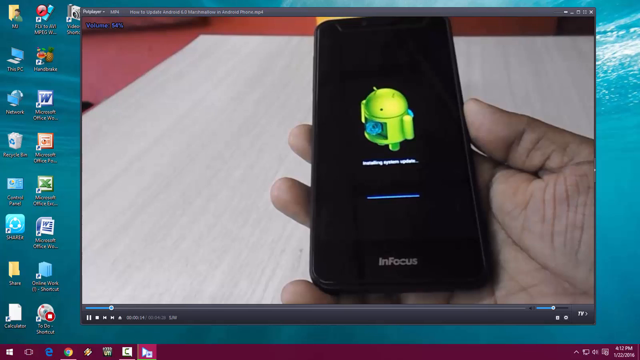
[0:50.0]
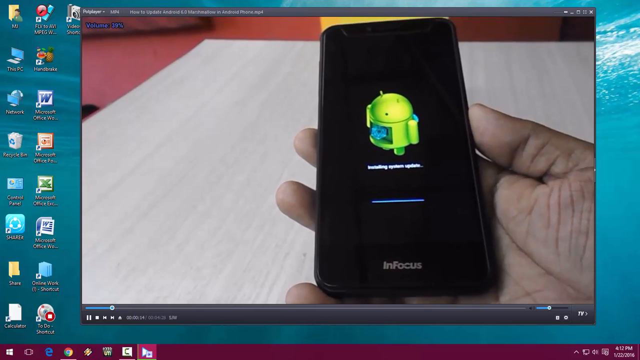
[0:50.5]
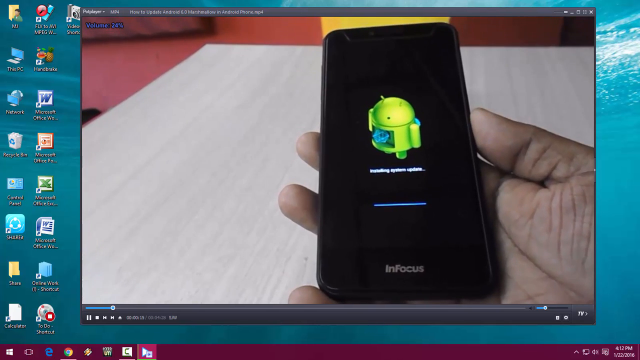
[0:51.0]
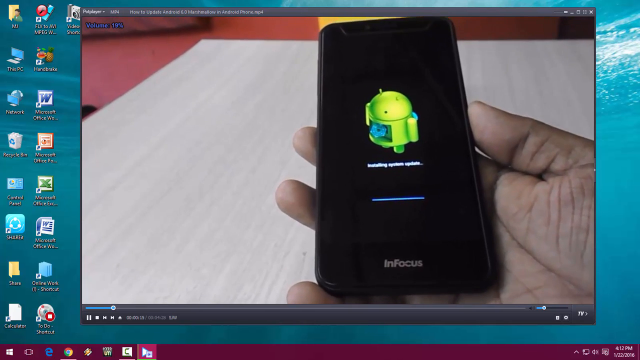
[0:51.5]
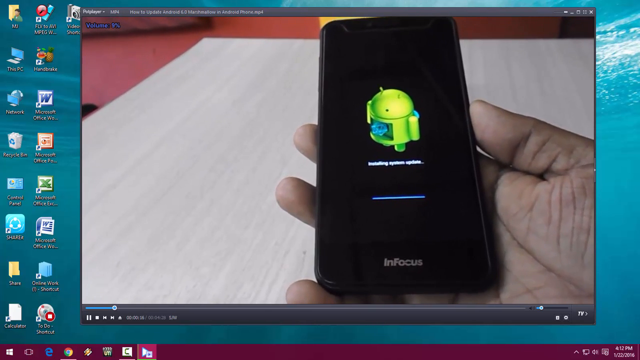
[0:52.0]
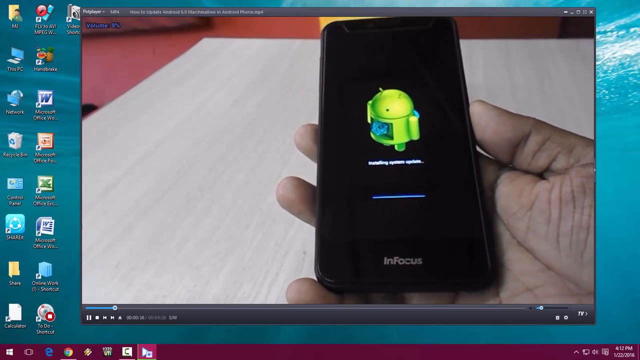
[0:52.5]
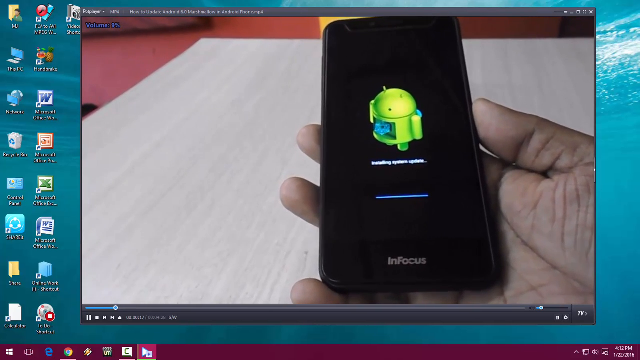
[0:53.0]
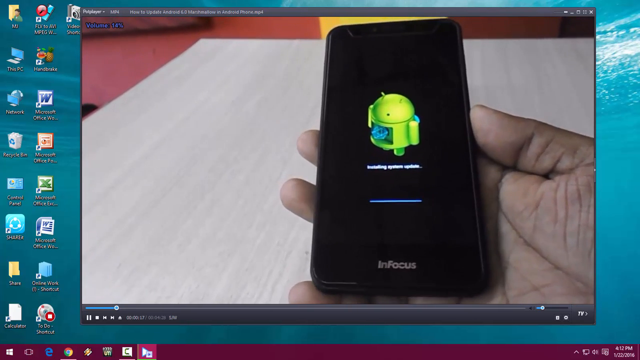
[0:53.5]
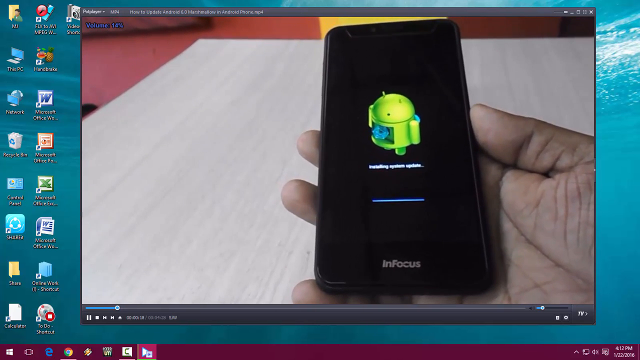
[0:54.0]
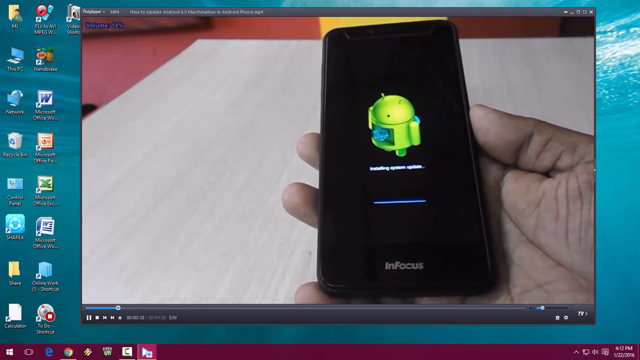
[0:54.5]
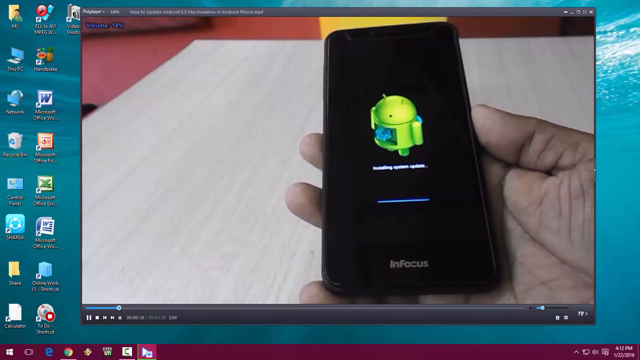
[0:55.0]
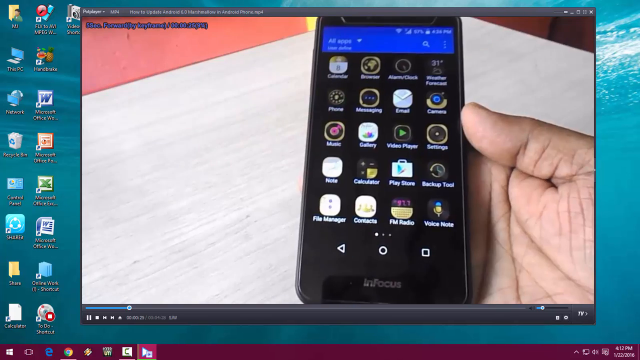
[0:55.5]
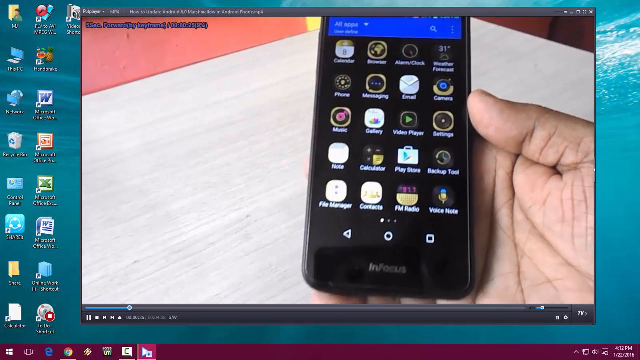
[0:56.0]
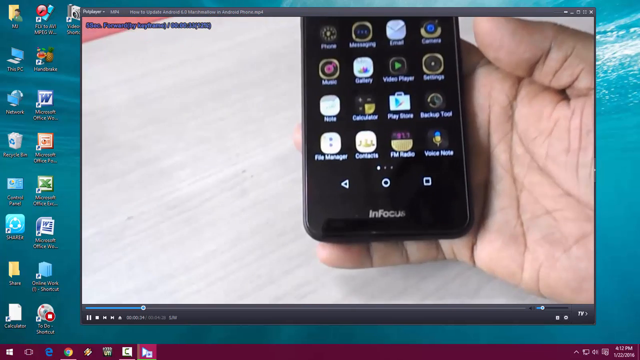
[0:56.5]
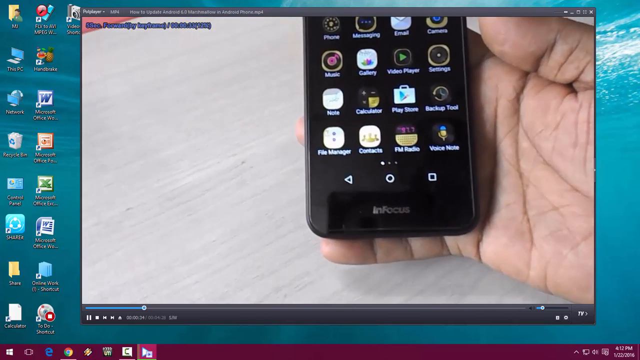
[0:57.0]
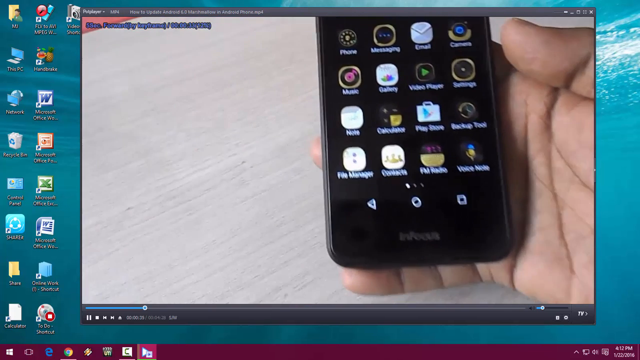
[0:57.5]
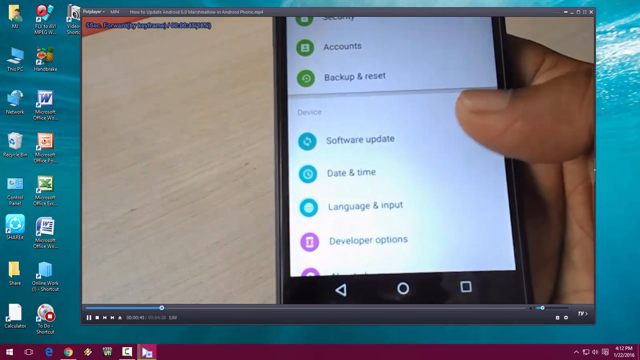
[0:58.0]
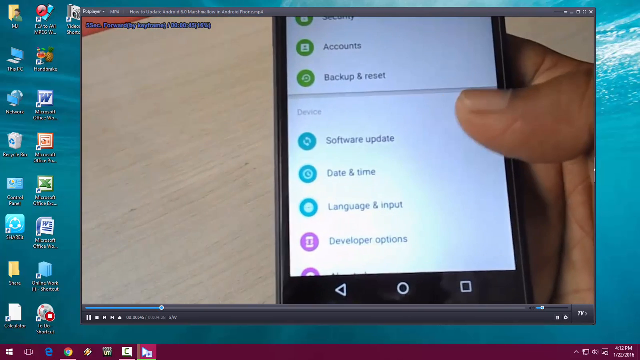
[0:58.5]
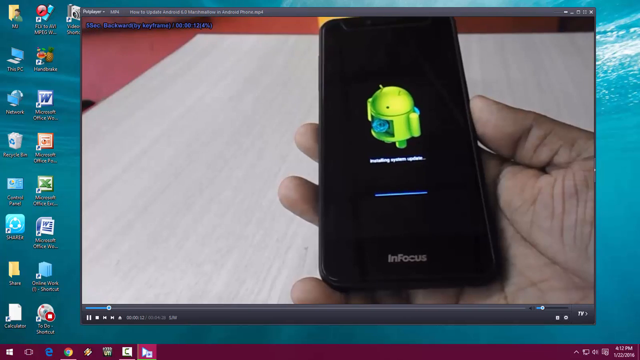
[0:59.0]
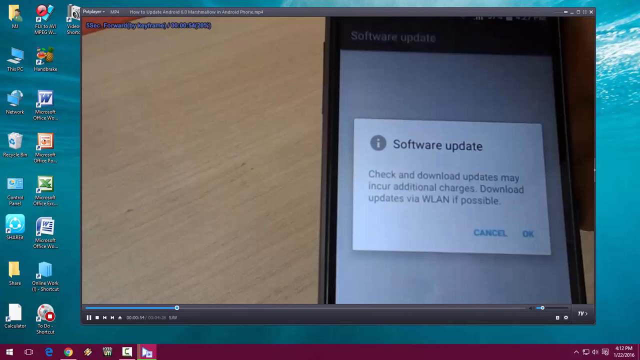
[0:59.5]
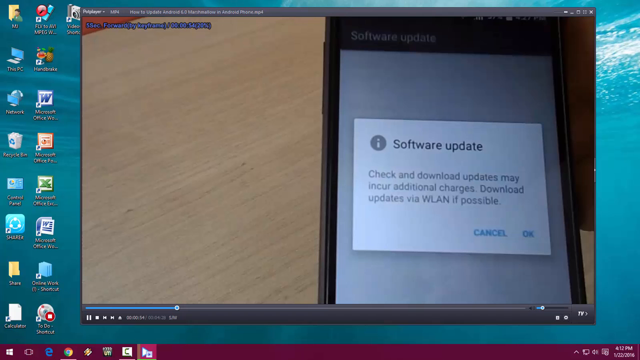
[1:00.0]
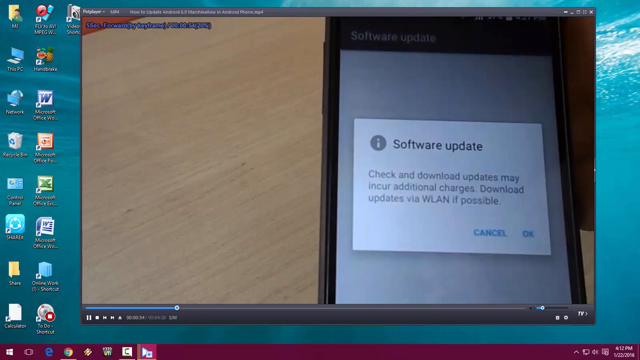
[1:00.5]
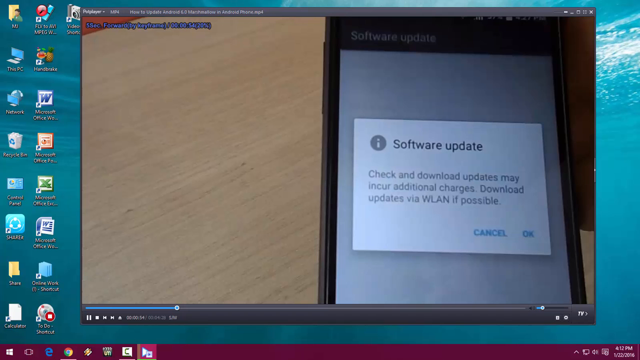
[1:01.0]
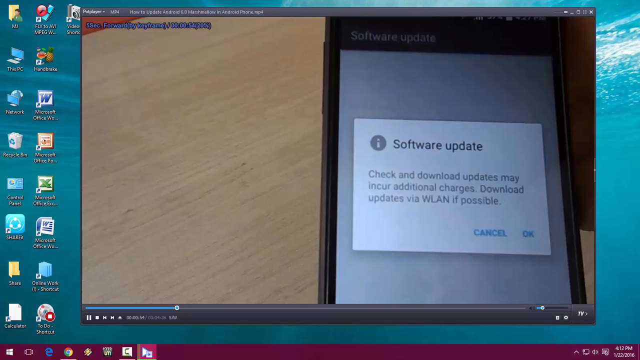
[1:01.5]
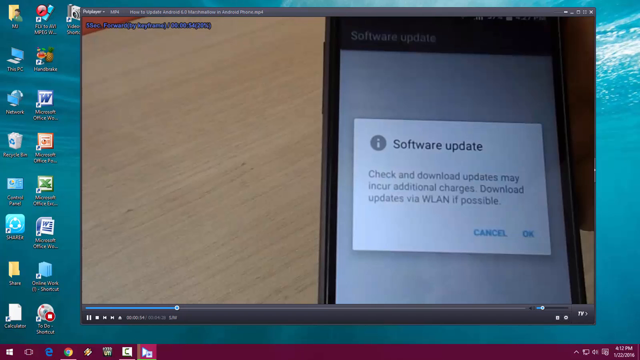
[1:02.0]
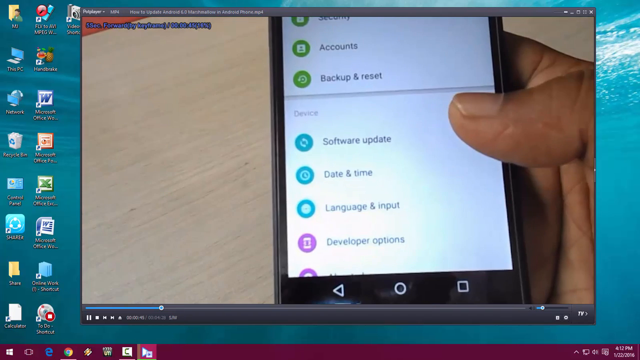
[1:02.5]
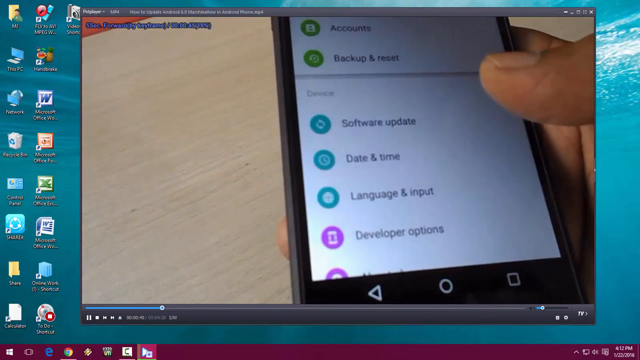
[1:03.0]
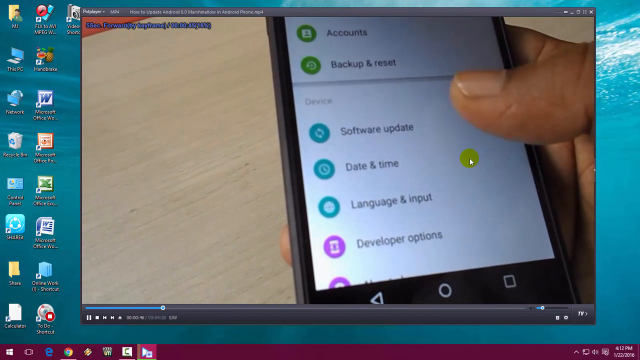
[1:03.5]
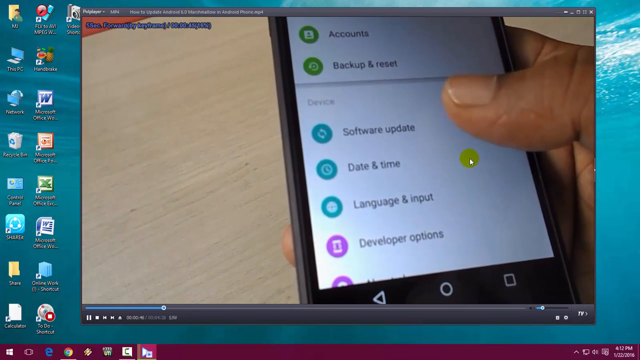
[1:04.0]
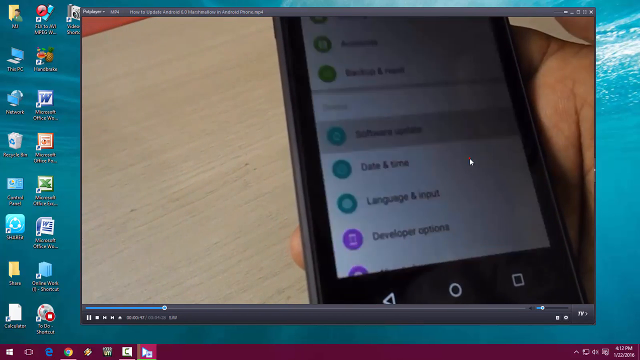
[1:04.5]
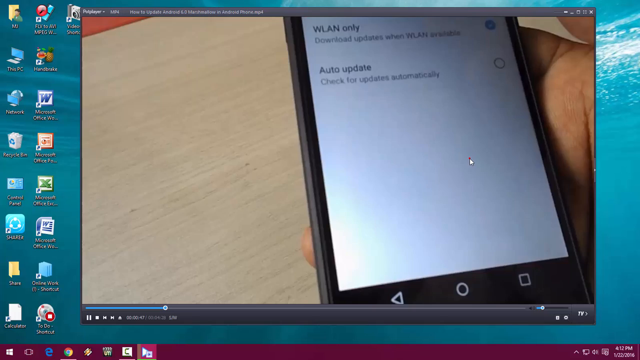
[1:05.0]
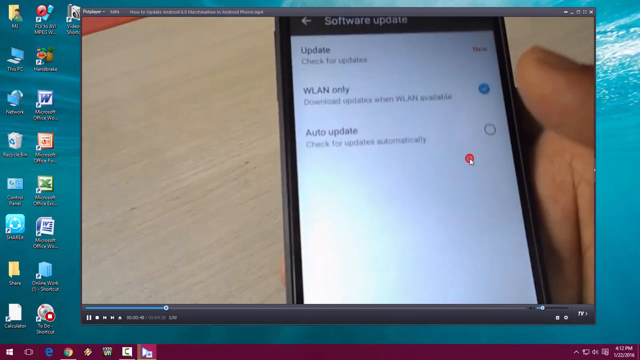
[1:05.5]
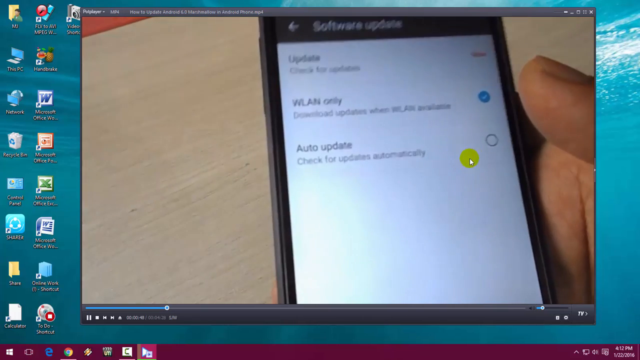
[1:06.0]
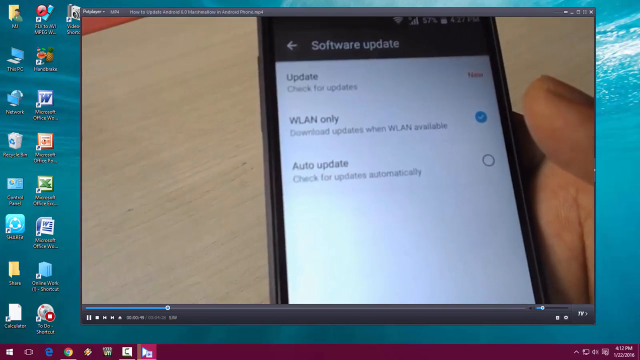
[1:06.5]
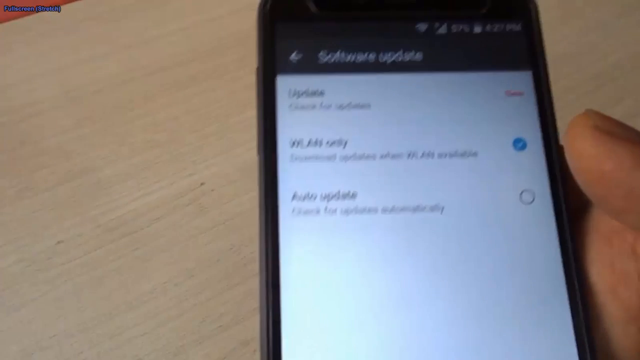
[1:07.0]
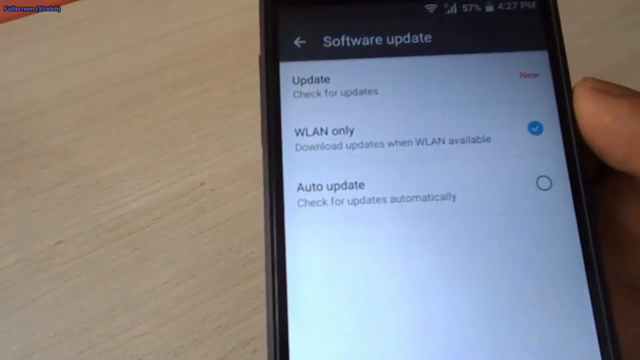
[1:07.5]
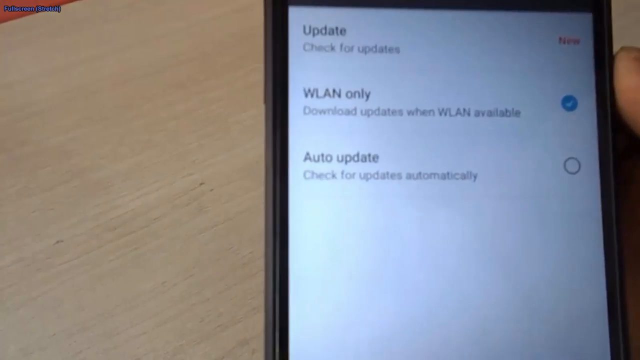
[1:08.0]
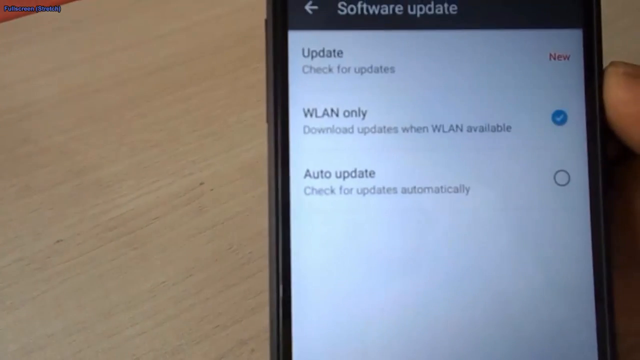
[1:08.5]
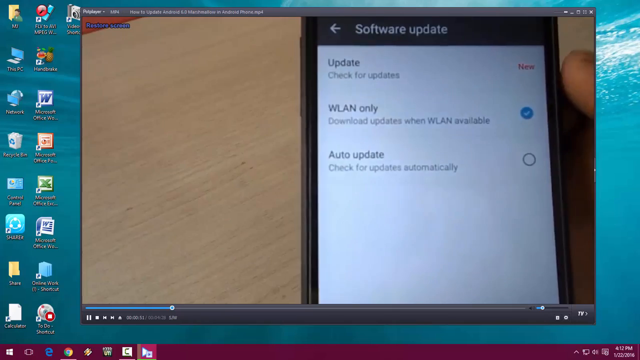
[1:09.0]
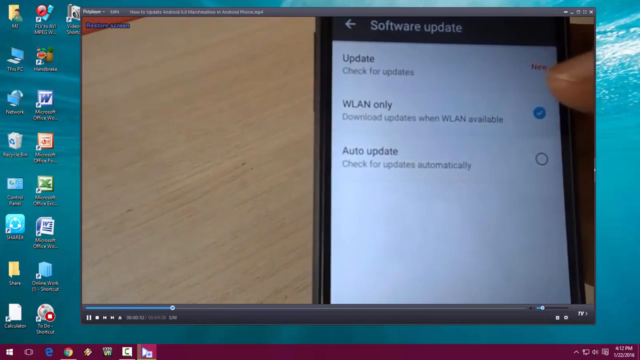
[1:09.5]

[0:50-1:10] A video is open in the PotPlayer video player. It shows a close-up of a person's hand holding an in-focus smartphone displaying the green Android robot logo, the message "initializing system update" underneath, and below that a small blue progress bar that is almost complete. Once it finishes loading, the phone shows its regular screen with all of its icons. The video then switches to a screen of settings options such as "software update", "date and time", "language and input" and "developer options". It returns to the close-up of the person holding the smartphone as it finishes initializing the update, then goes to a close-up of the phone screen with a white pop-up reading "software update. Check and download updates may incur additional charges. Download updates via WLAN if possible", with a cancel and an OK button. The video then goes back to the person going through the settings options, who clicks the software update option, bringing up a screen with three options: "update", "WLAN only" and "auto update".